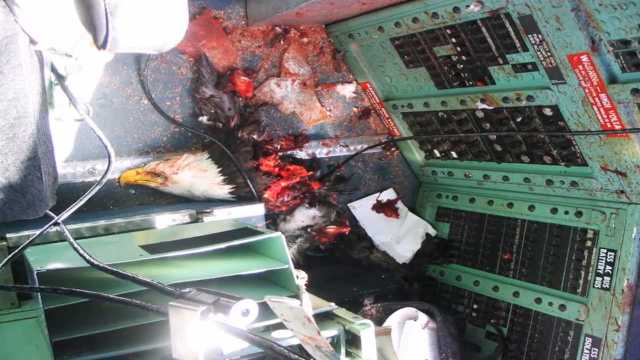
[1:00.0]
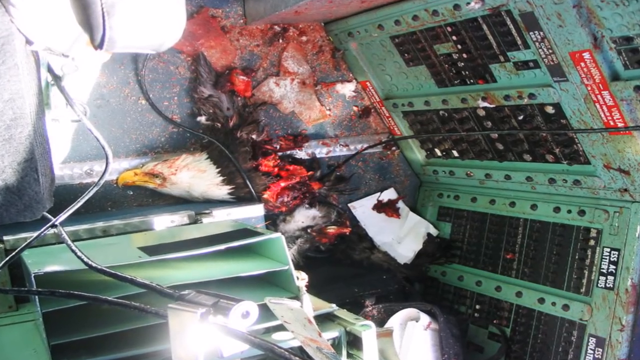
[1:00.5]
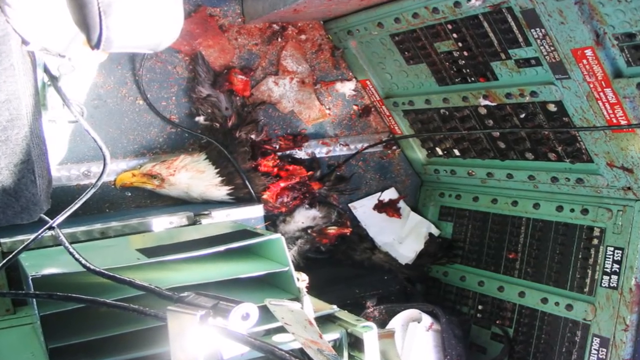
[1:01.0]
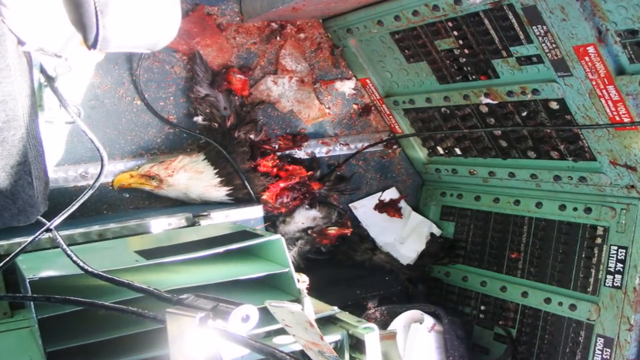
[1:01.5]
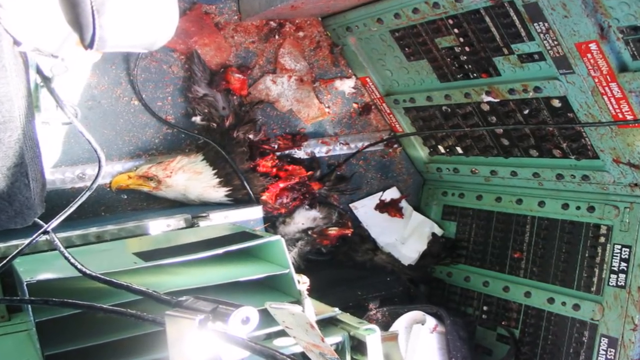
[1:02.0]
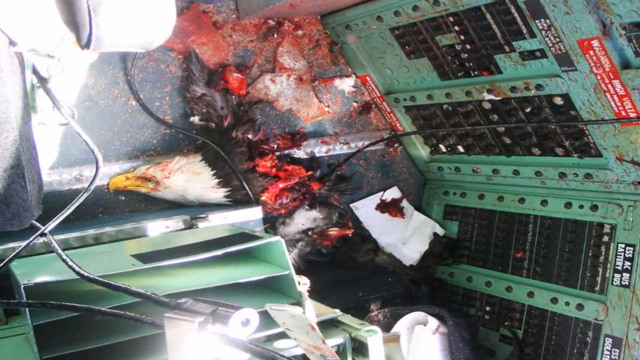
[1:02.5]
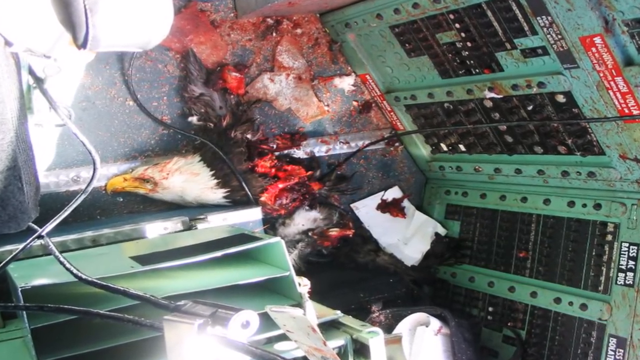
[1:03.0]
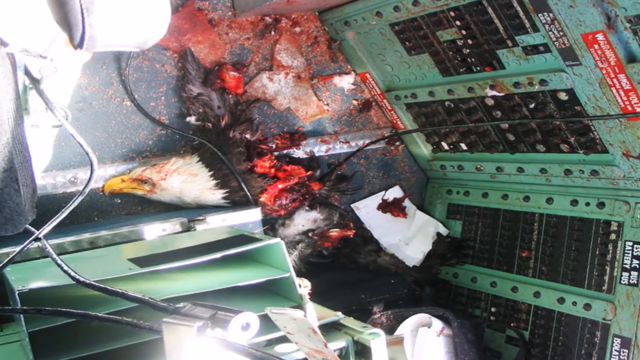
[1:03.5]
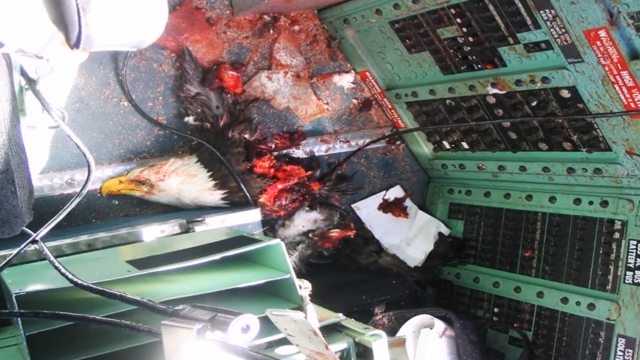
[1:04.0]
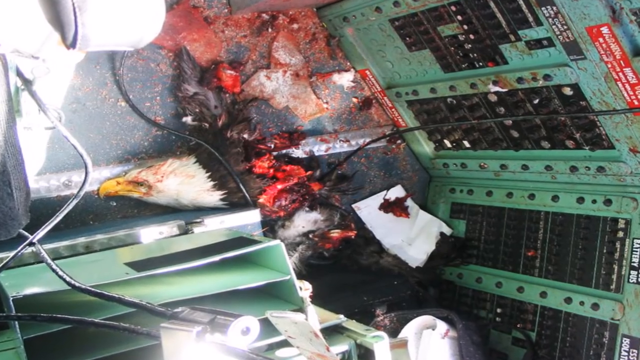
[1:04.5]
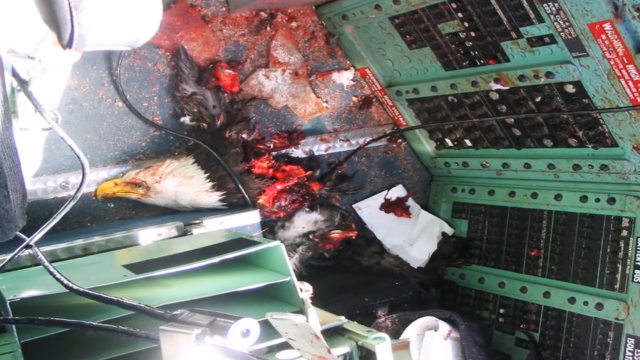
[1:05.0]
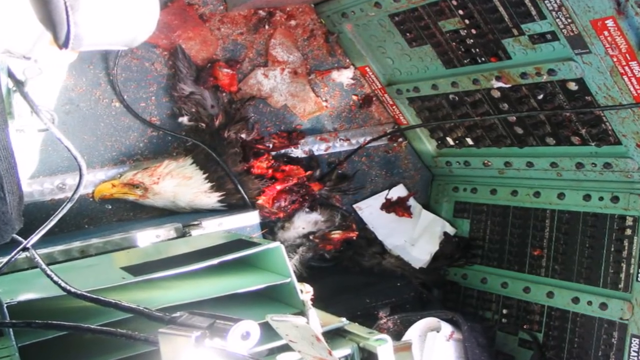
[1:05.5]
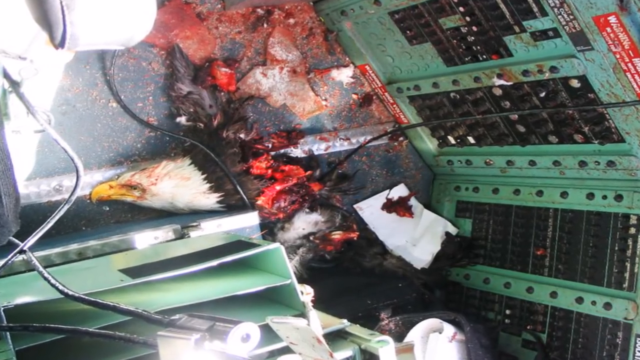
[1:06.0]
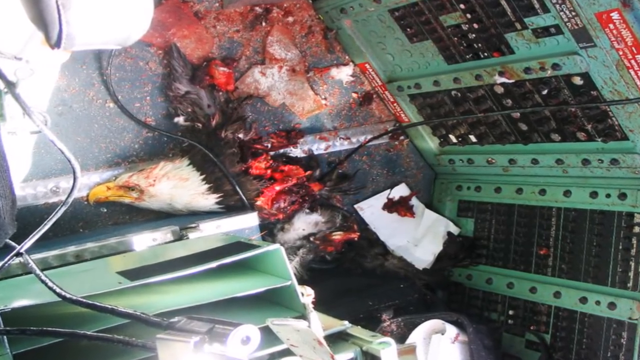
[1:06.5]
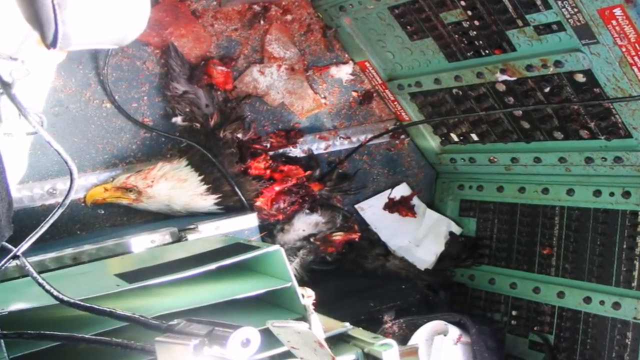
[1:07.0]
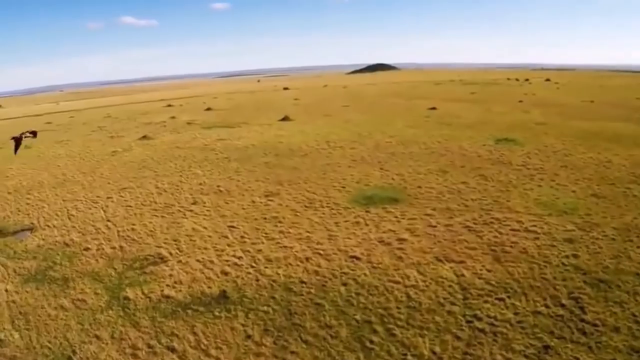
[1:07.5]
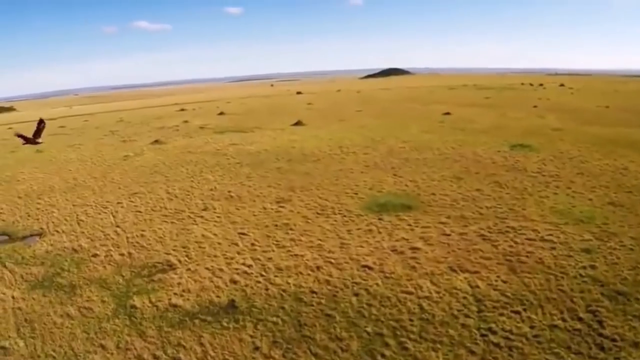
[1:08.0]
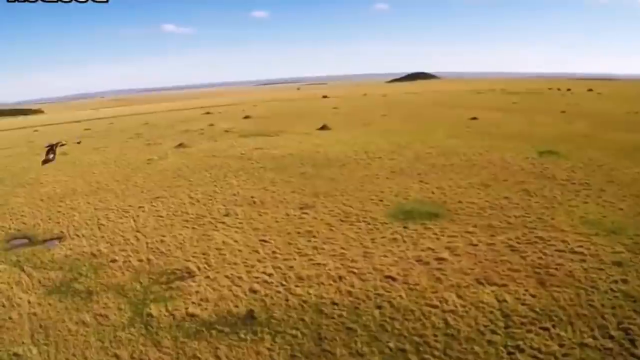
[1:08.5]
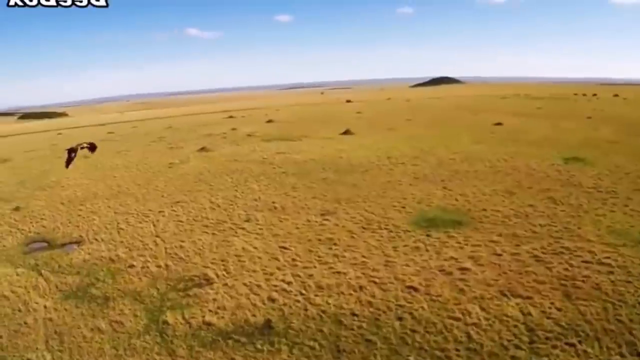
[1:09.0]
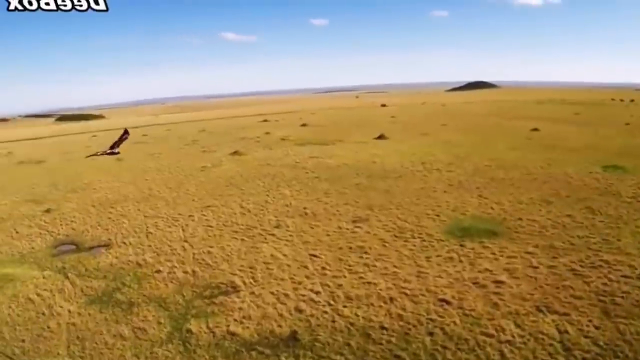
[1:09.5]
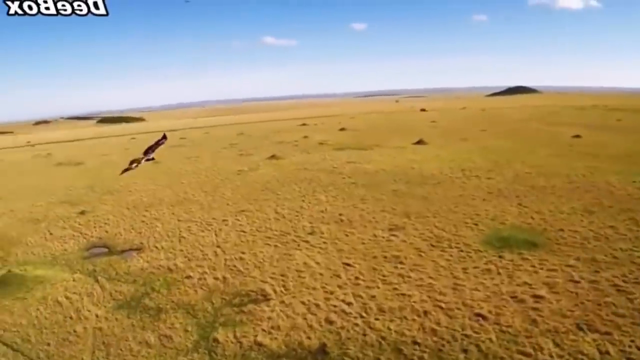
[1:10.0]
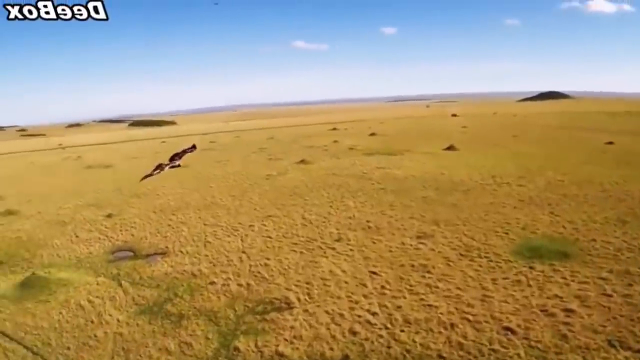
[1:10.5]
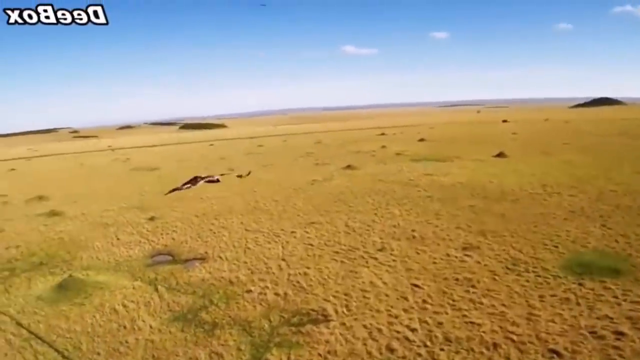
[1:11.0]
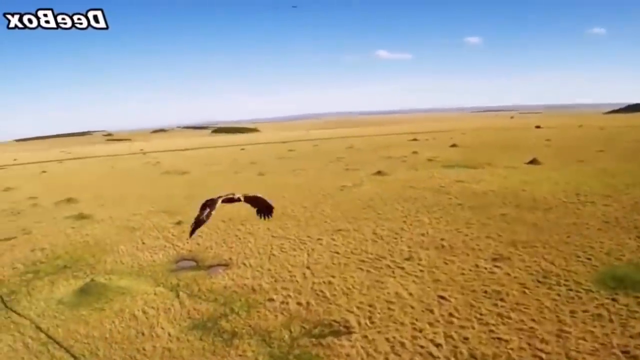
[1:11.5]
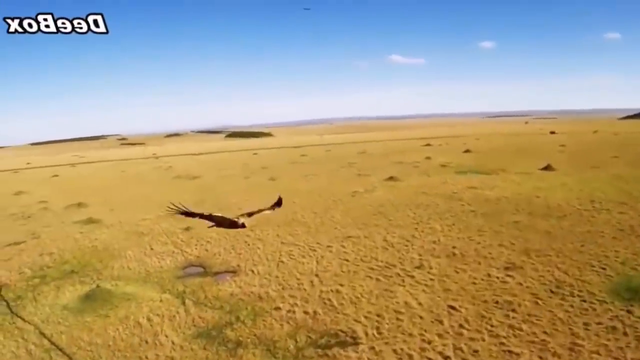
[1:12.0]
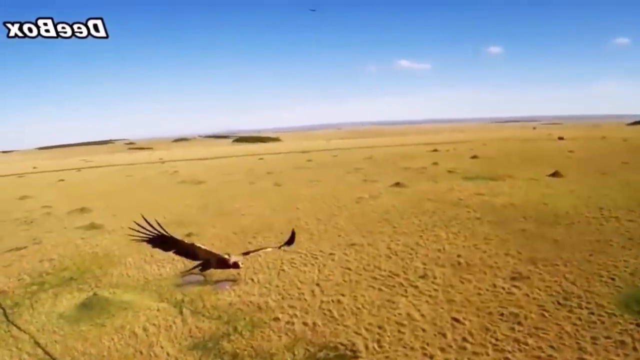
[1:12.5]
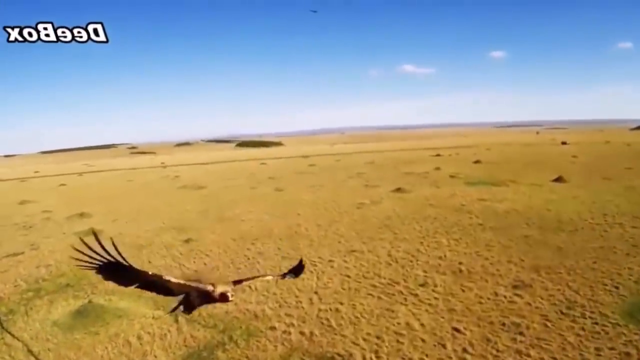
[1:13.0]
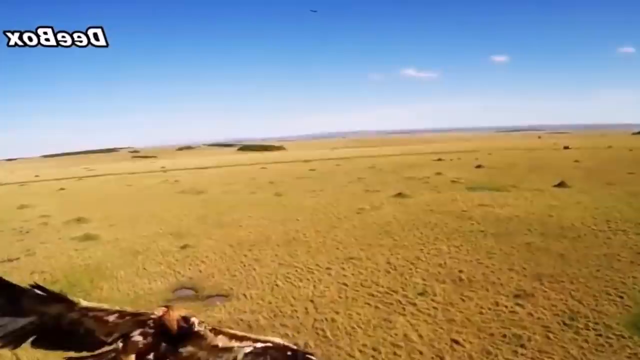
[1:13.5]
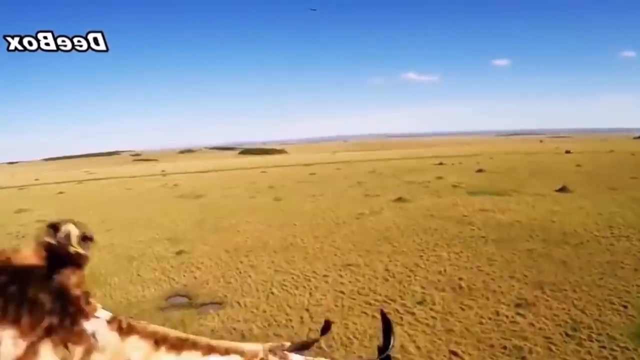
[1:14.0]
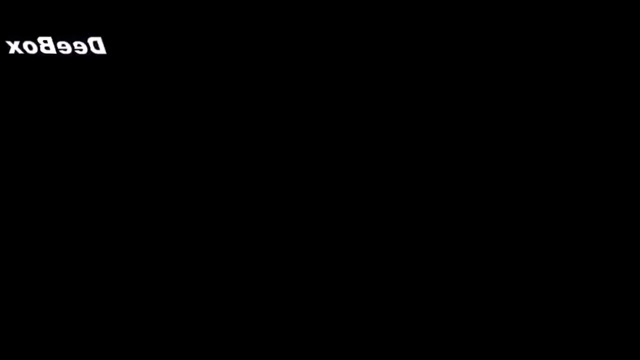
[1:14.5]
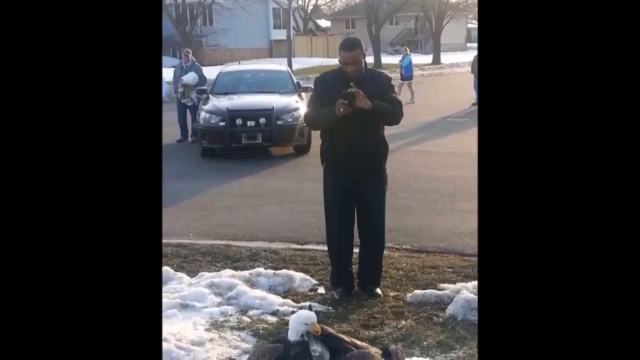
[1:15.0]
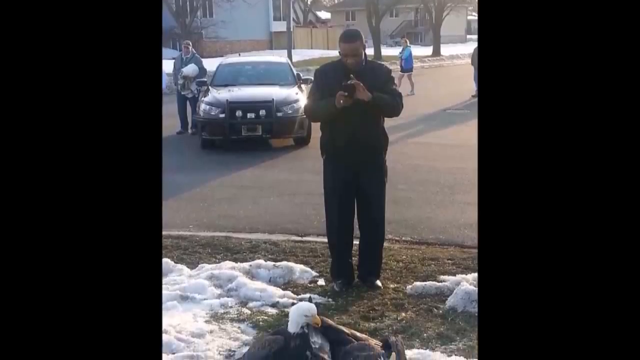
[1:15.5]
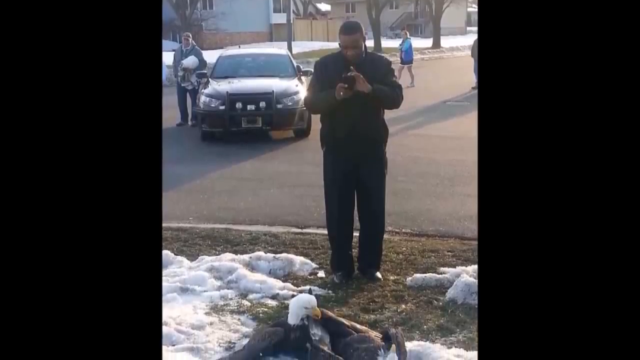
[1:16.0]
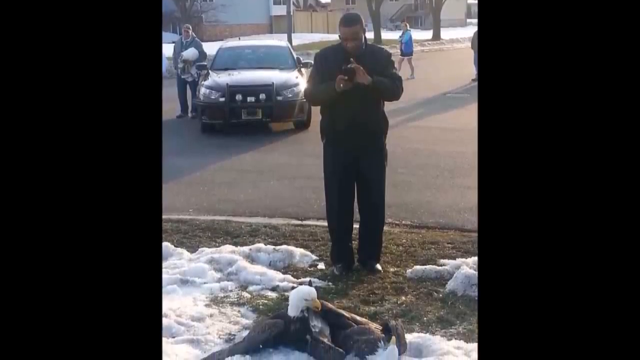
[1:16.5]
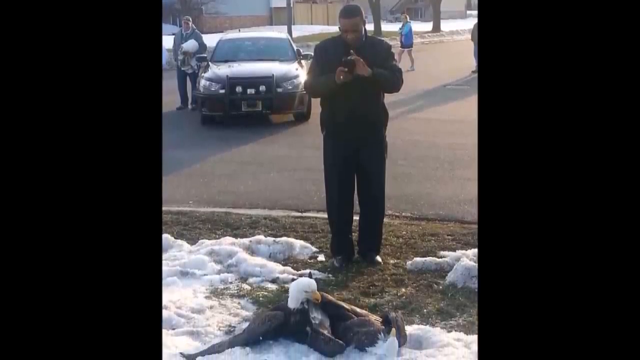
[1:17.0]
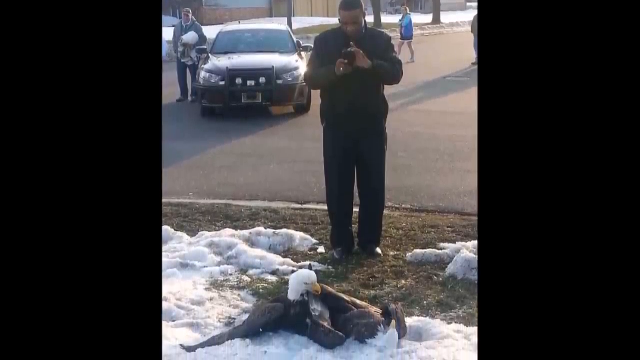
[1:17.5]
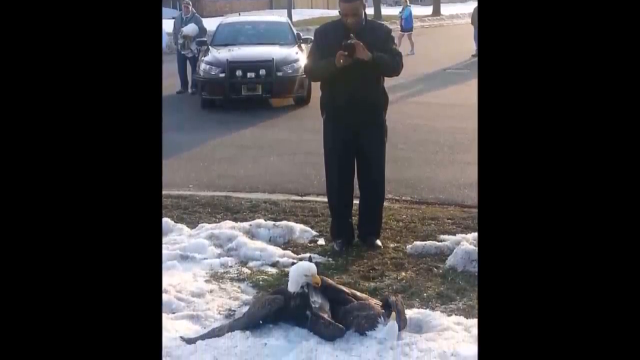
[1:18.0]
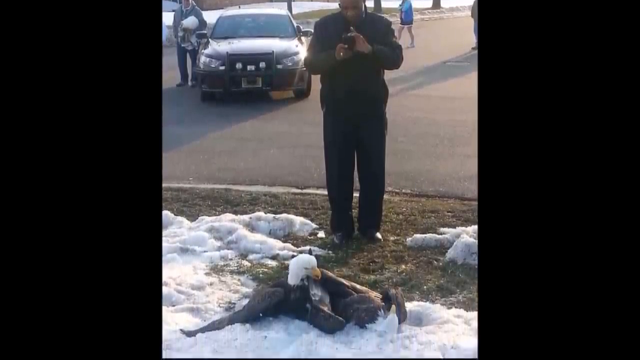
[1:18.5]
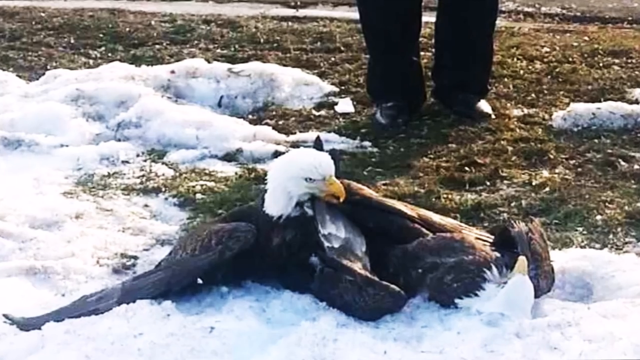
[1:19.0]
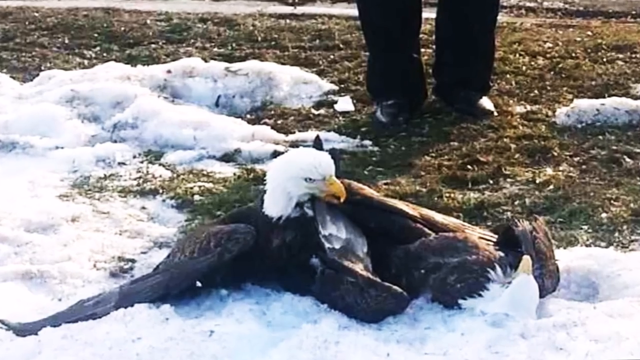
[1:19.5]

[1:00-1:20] An injured bald eagle appears, seemingly with its legs off. It has been cut open and its inner parts are visible. There are a number of cables, machines and lights, possibly an operating table. The eagle is clearly injured; it was possibly decapitated, and maybe its wings were taken off. Next, an eagle flies over a grassland. Then a man takes a picture of a bald eagle in a snowy place, with what looks like a duck next to it. The man stands there, and a police car is in the back.